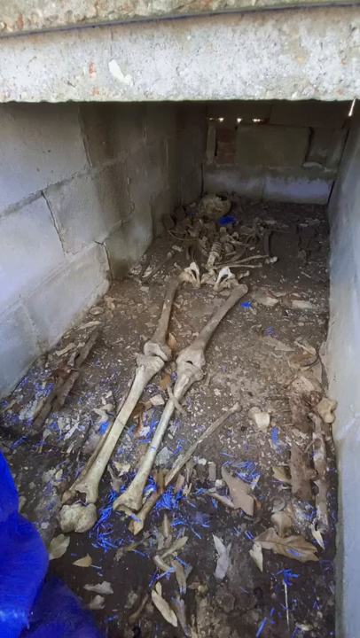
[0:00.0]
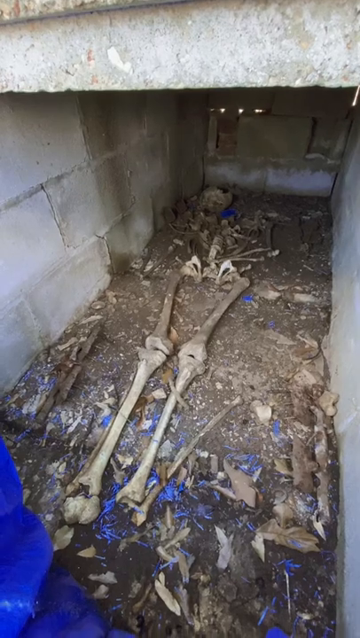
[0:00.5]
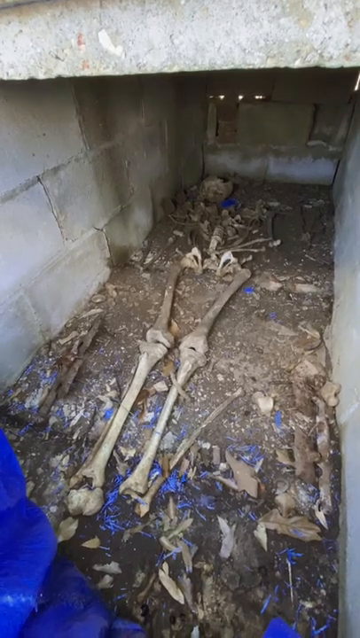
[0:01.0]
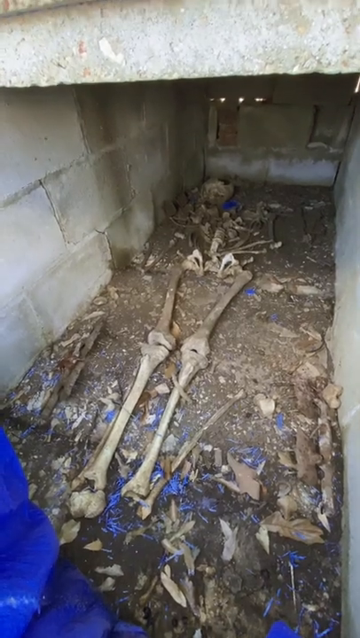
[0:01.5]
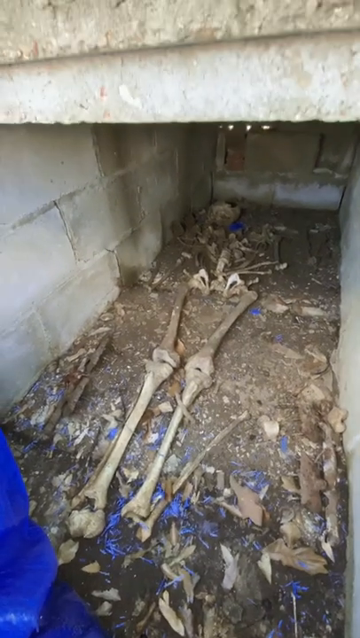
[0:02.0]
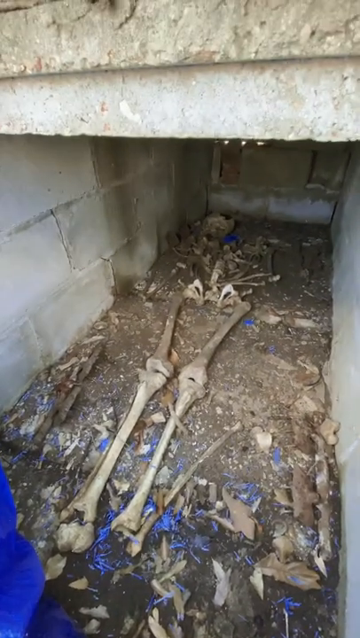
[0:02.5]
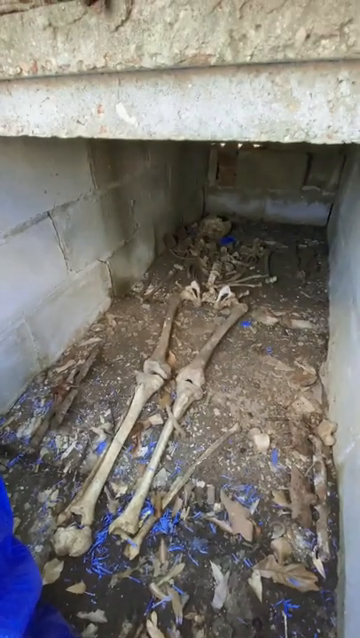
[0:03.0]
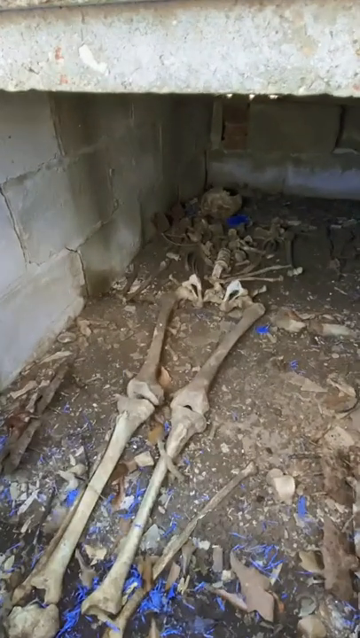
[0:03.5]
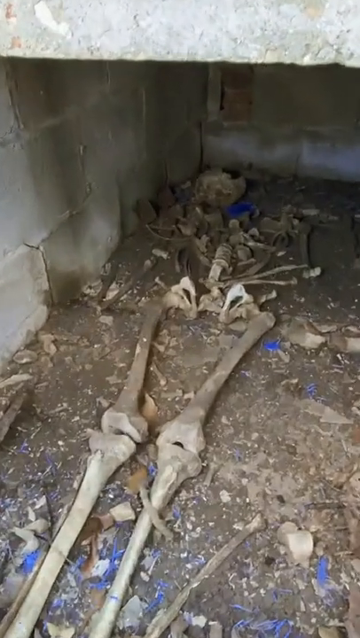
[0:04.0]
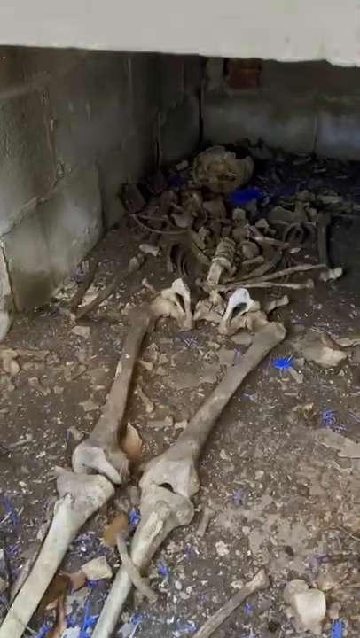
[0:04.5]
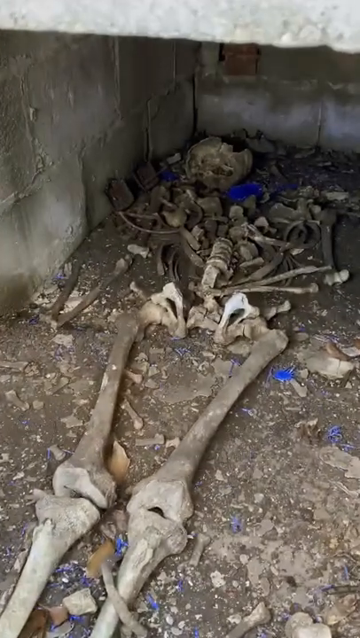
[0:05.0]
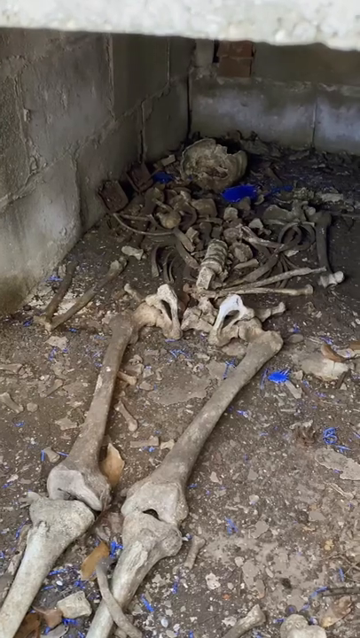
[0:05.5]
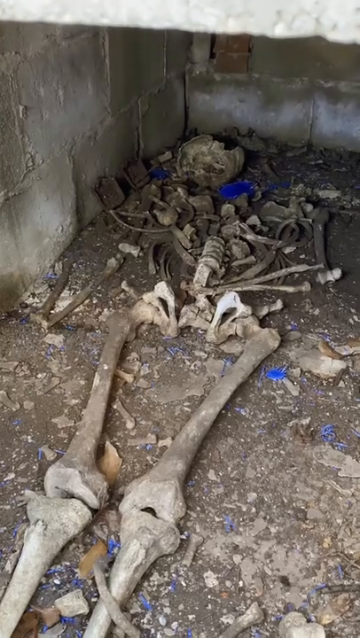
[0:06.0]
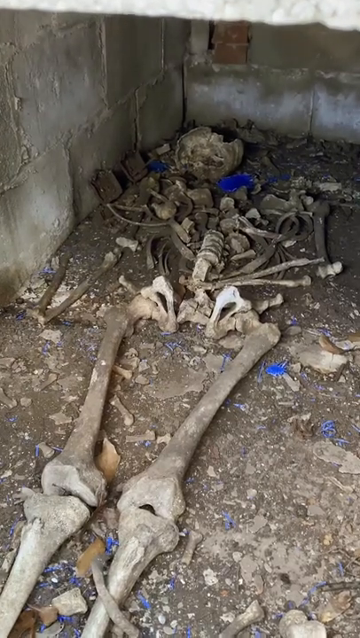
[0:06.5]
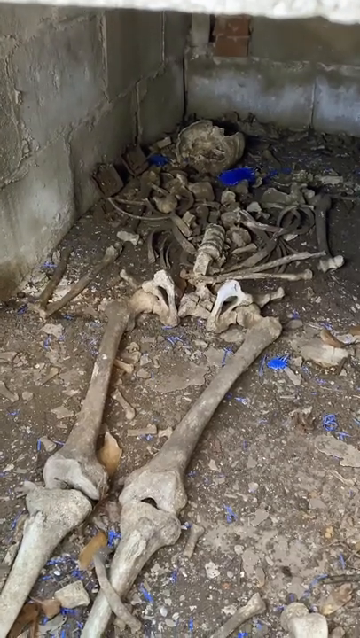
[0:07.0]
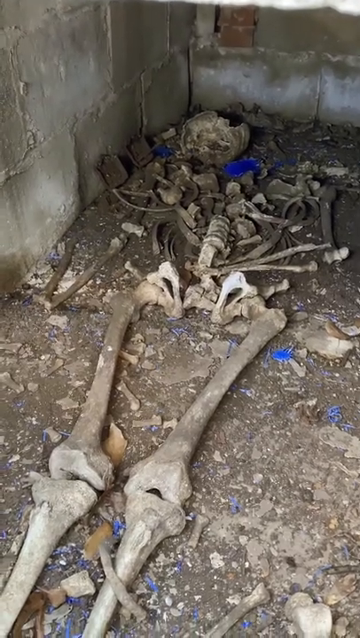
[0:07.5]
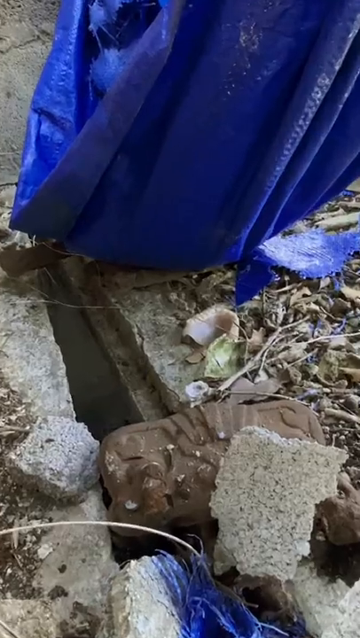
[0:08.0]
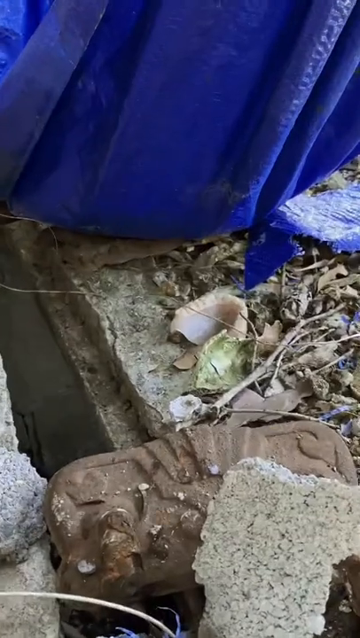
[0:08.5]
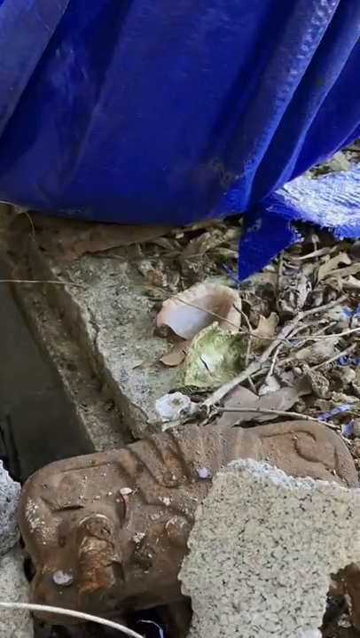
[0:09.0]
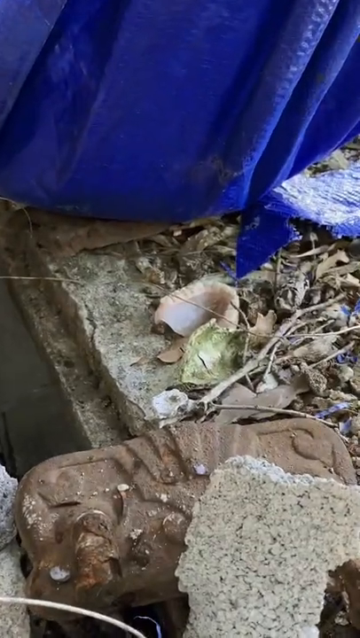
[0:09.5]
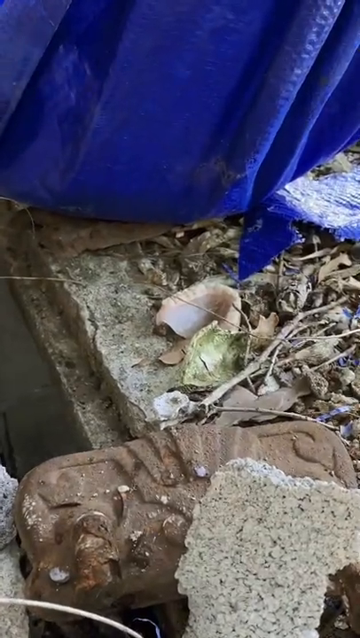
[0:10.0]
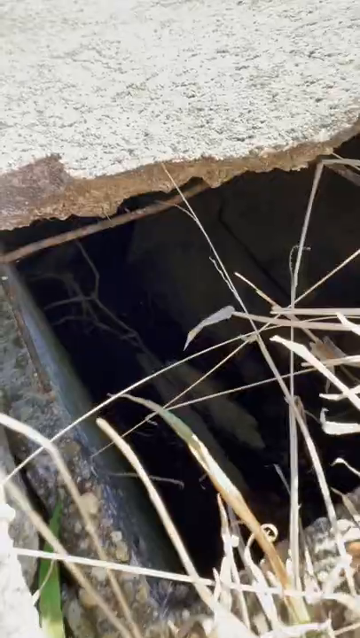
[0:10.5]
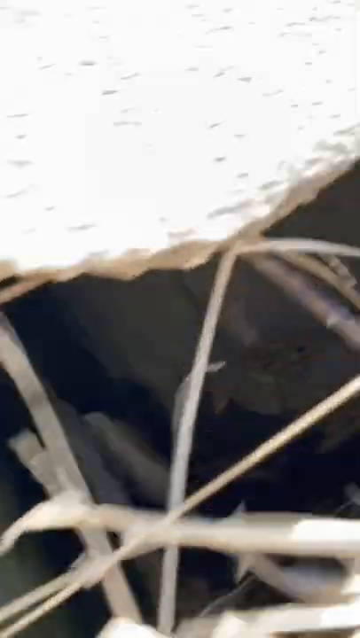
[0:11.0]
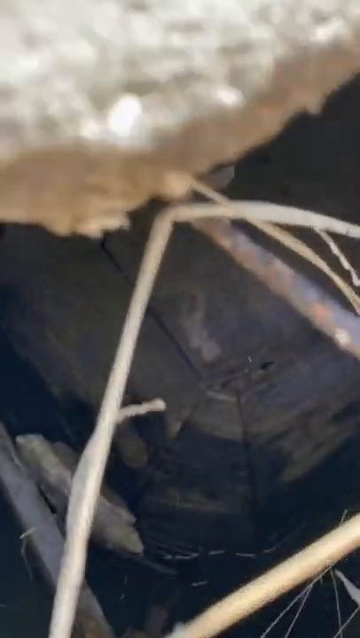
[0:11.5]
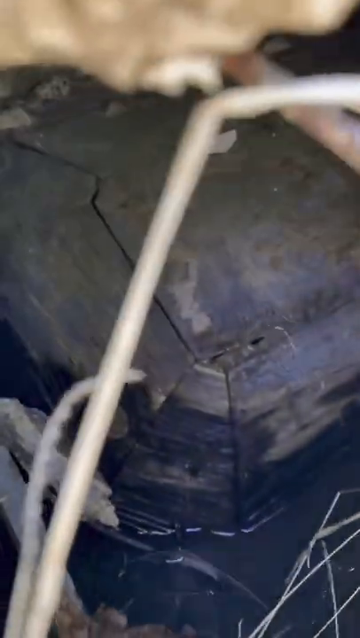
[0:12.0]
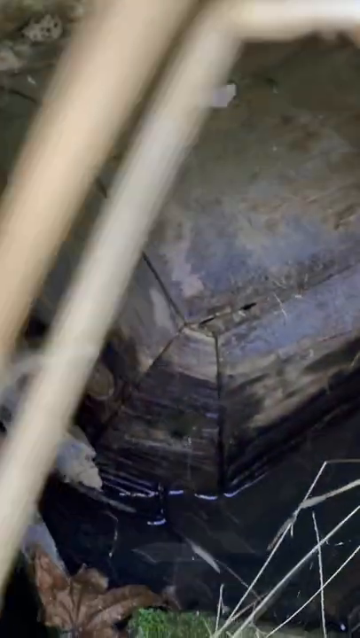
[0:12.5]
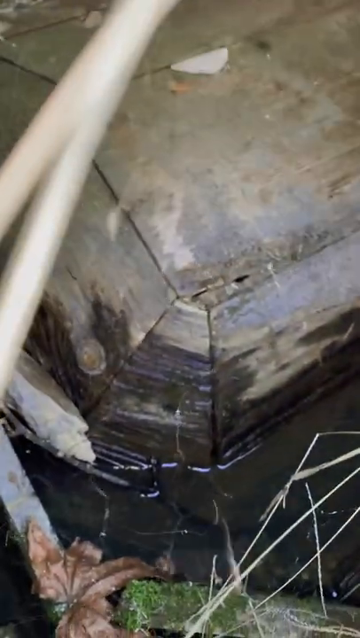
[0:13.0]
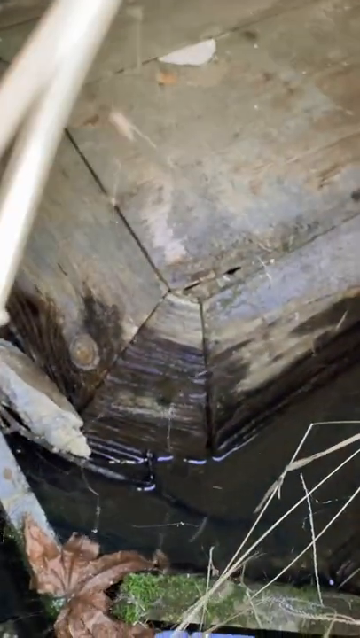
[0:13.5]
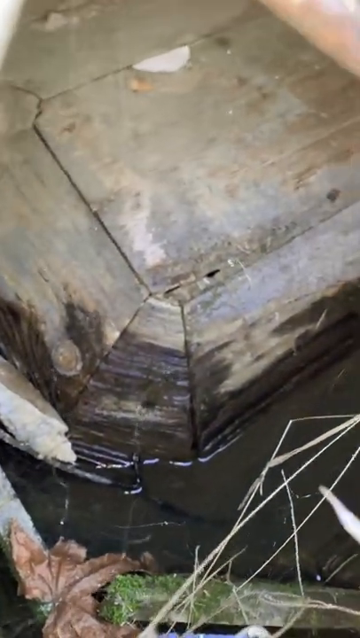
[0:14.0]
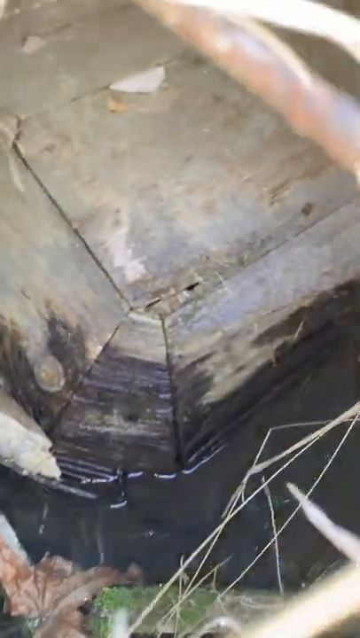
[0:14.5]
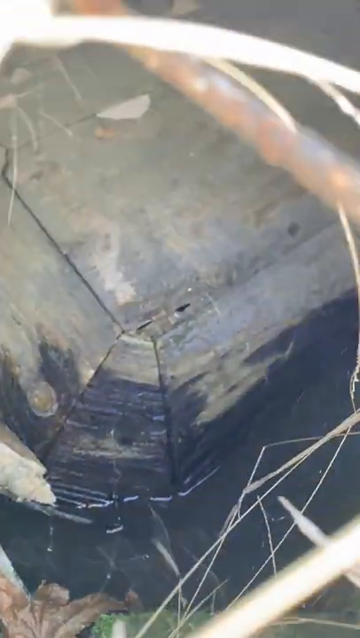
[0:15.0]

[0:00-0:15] A skeleton appears to be a whole skeleton, lying in the dirt and seemingly buried underneath a cement brick structure, so it looks like the inside of a tomb. The camera zooms in on the bones, showing the hips and rib cage. Most of the hip bones are there, while the ribs are scattered, and the legs are very long. The skeleton is completely skeletonized, with no skin on the bones, and the person looks like they had been dead for a very long time, probably lying there a long time. A bright royal blue tarp is around the skeleton and is visible in various parts of the video. The camera moves around to show various aspects of the tomb, and it looks like the place where the person was buried in their crypt can be seen. The setting is outdoors in nature, where the skeleton has been unearthed. Part of what looks like a coffin, where the person might originally have been, is shown before the camera focuses on the bones. Most of the video focuses on the skeleton.